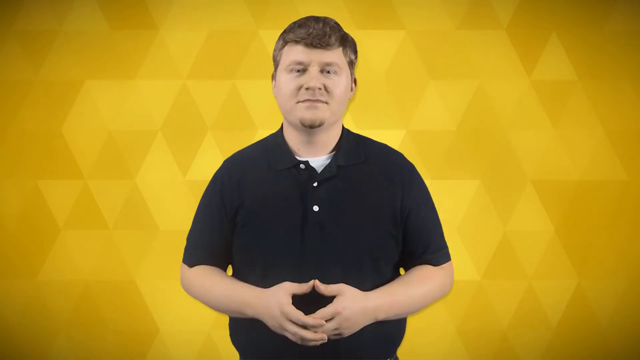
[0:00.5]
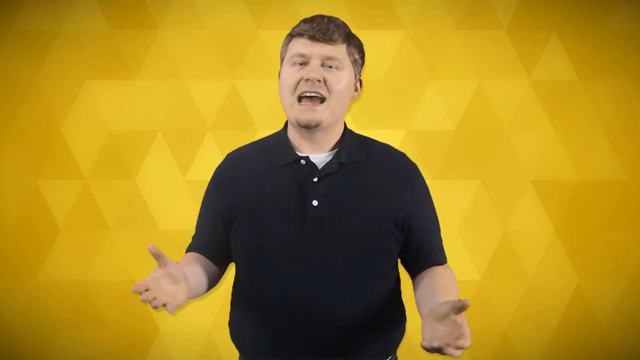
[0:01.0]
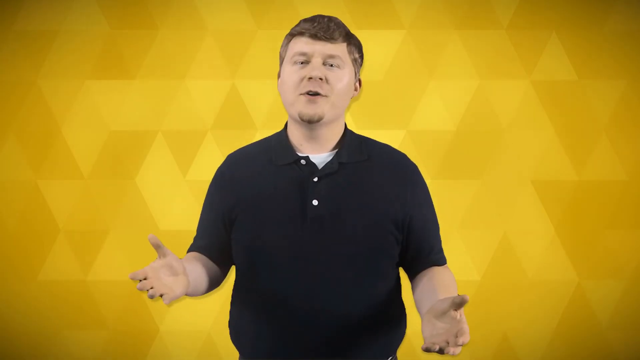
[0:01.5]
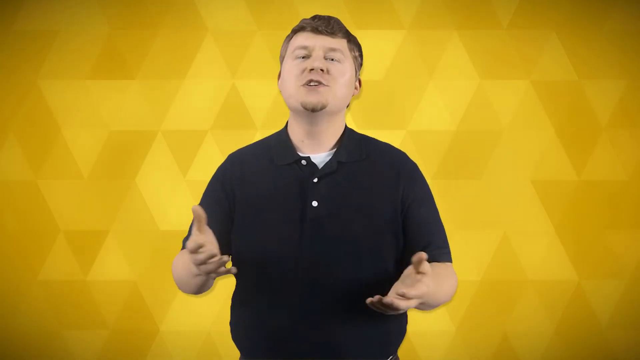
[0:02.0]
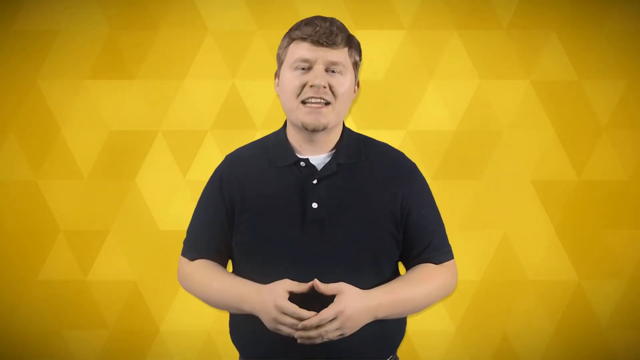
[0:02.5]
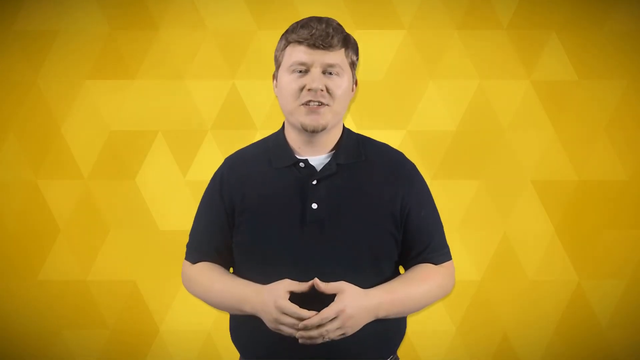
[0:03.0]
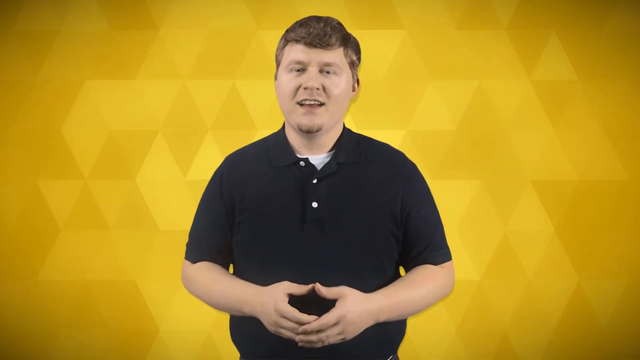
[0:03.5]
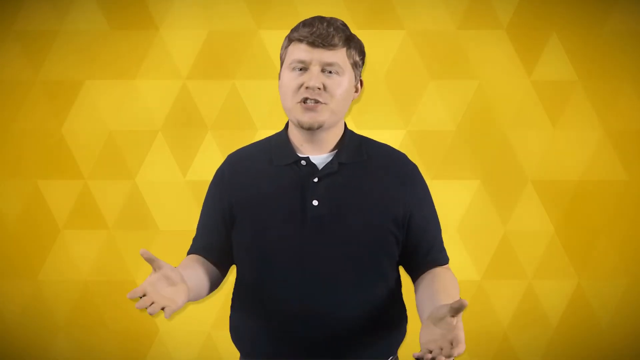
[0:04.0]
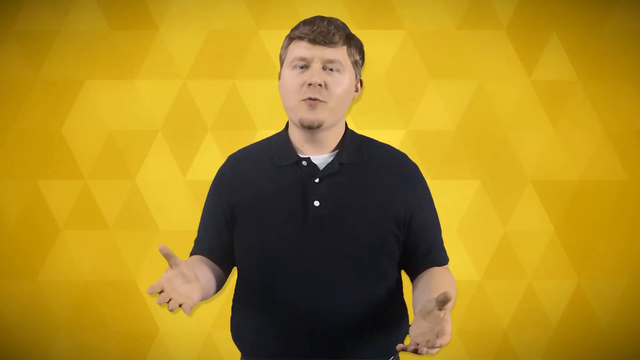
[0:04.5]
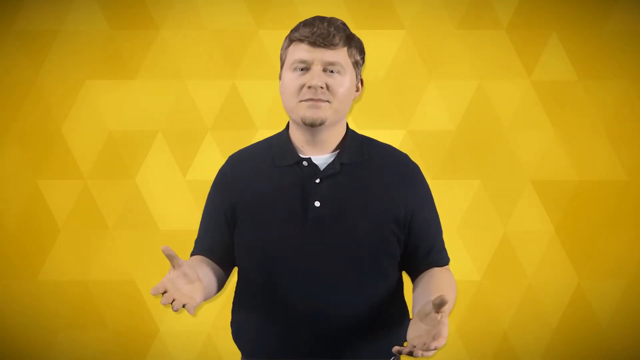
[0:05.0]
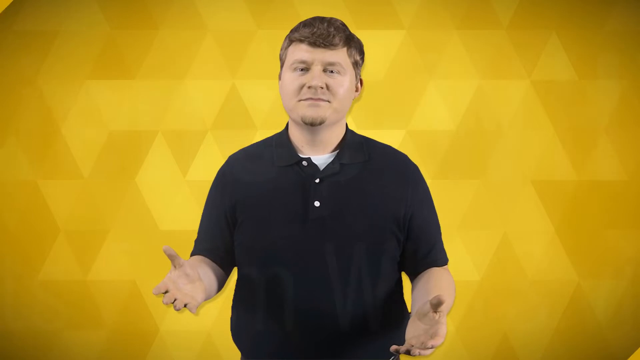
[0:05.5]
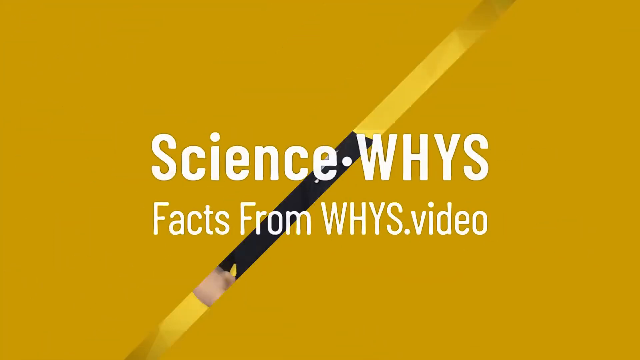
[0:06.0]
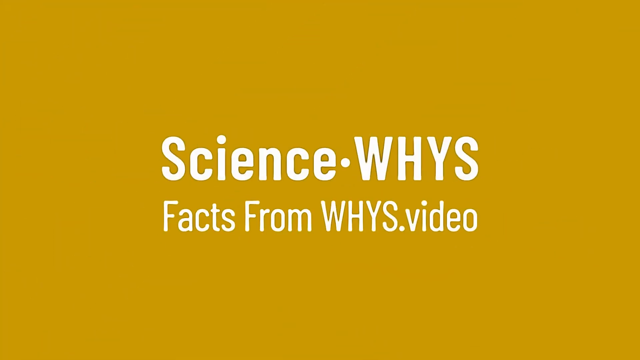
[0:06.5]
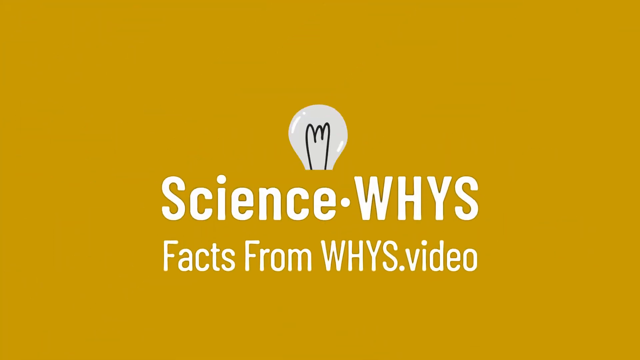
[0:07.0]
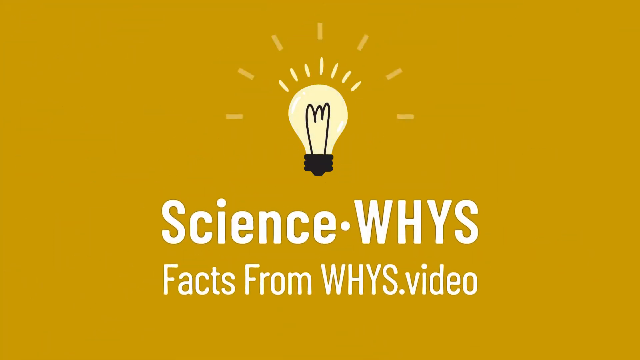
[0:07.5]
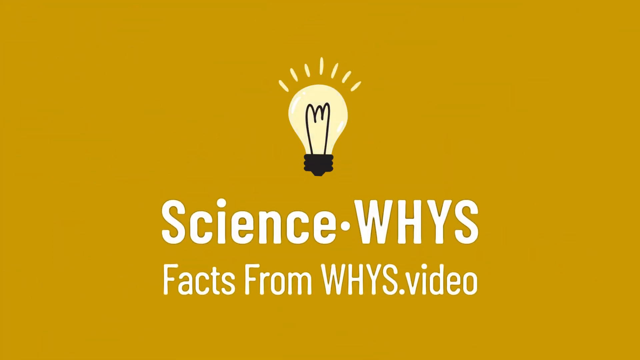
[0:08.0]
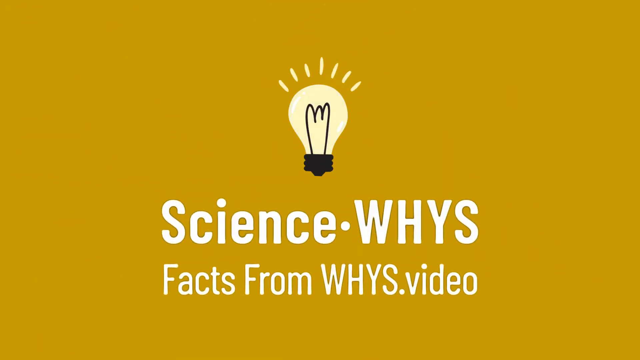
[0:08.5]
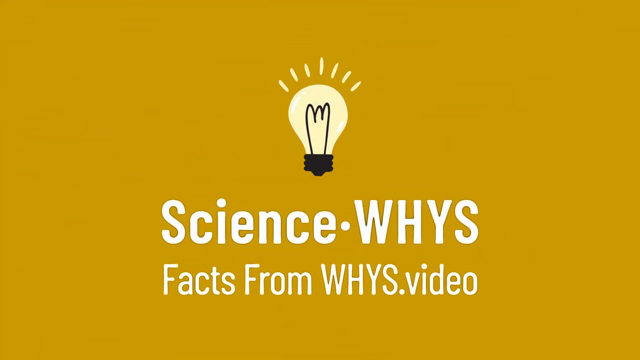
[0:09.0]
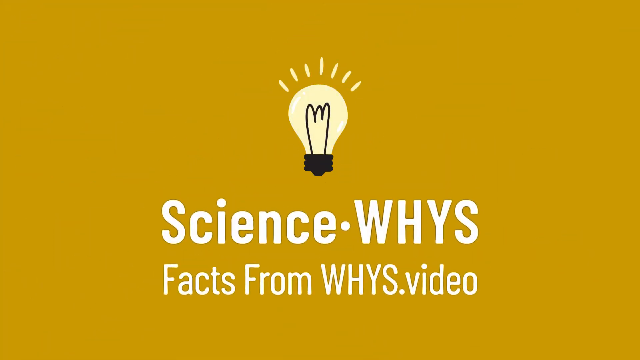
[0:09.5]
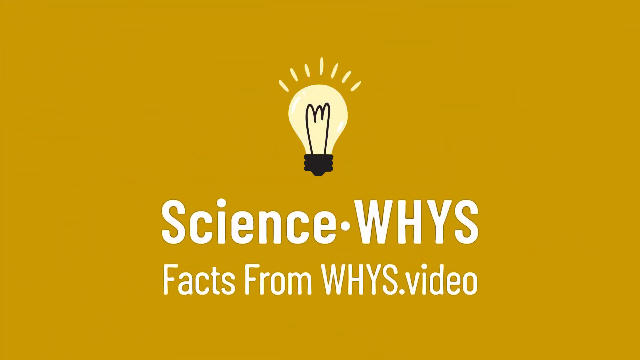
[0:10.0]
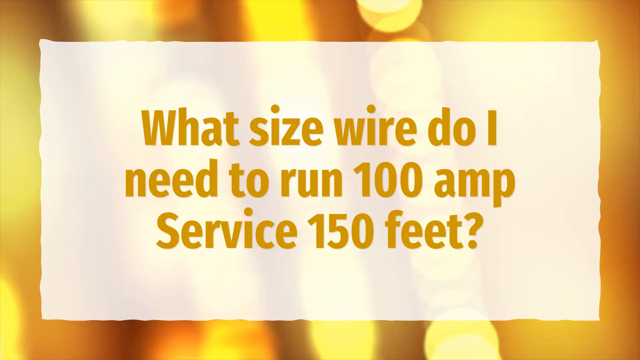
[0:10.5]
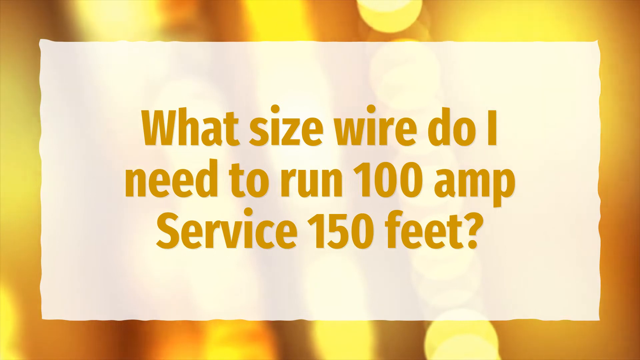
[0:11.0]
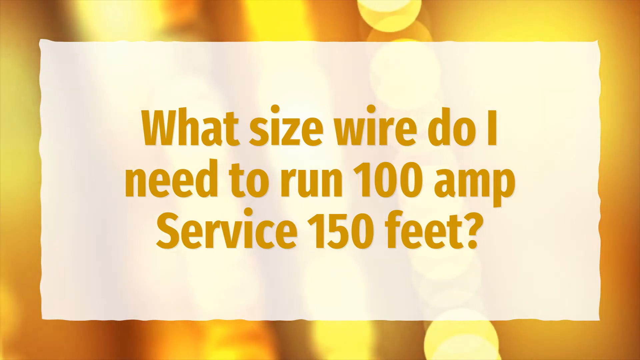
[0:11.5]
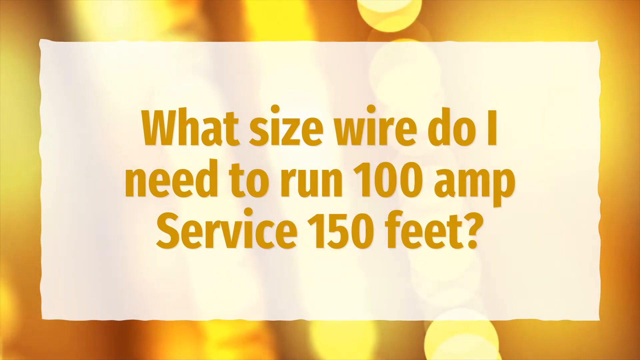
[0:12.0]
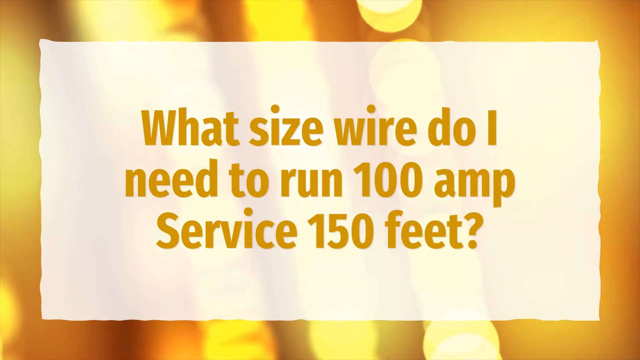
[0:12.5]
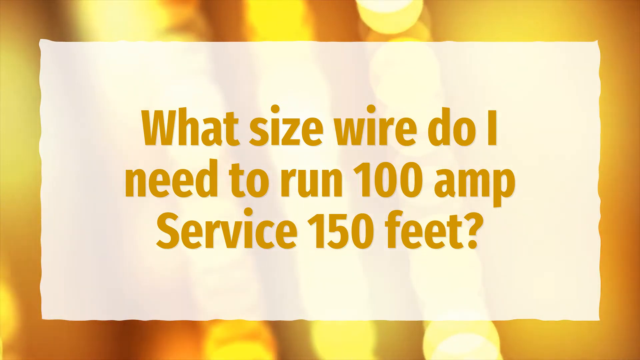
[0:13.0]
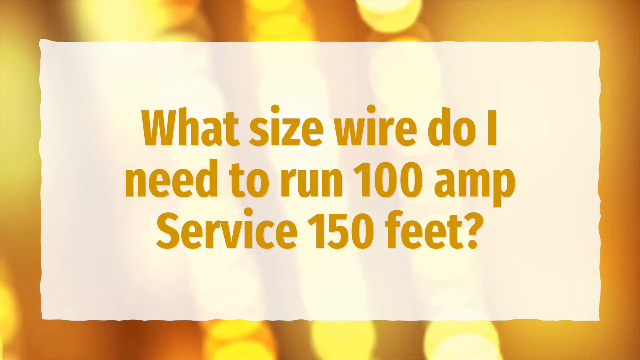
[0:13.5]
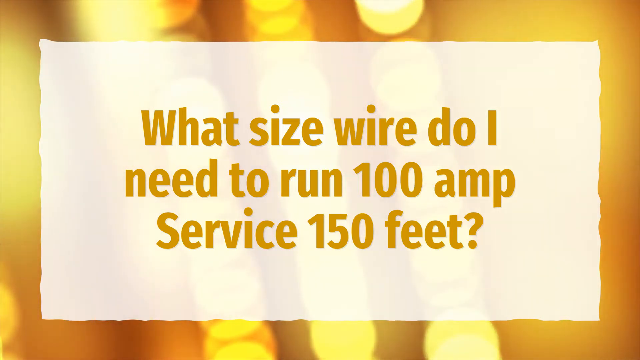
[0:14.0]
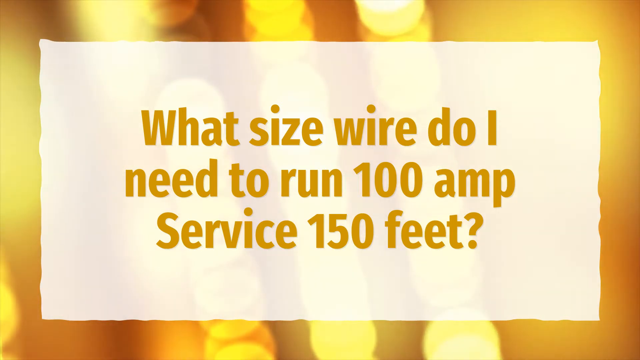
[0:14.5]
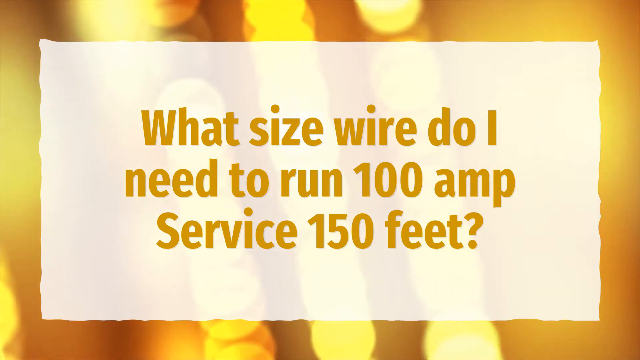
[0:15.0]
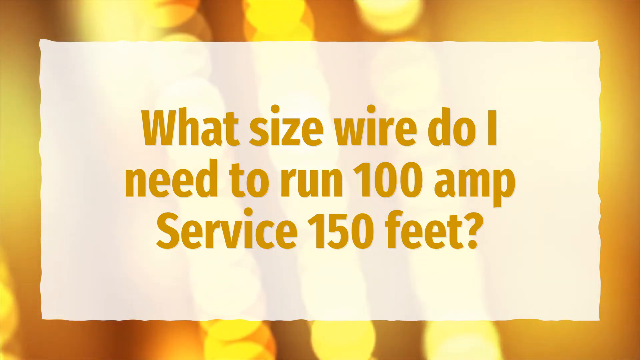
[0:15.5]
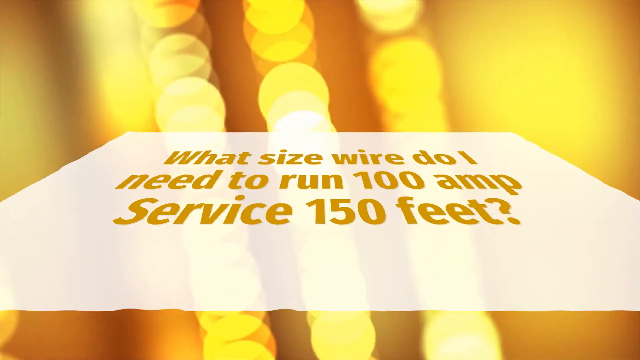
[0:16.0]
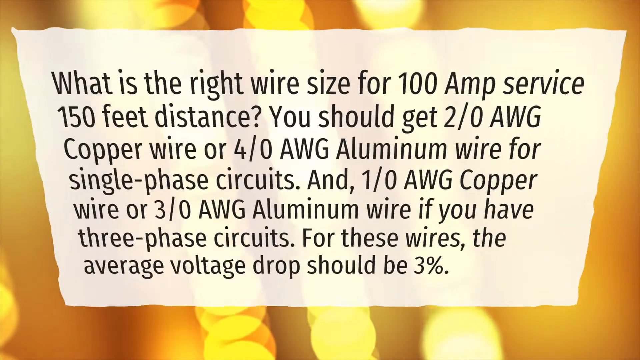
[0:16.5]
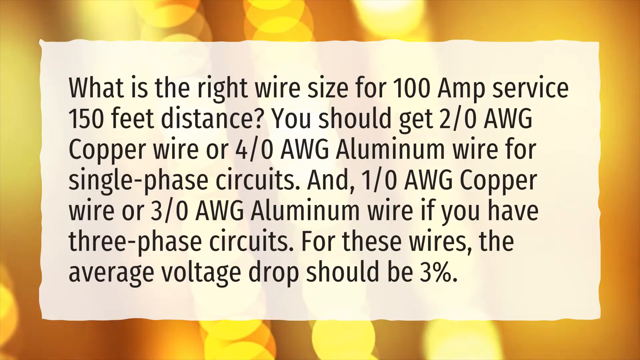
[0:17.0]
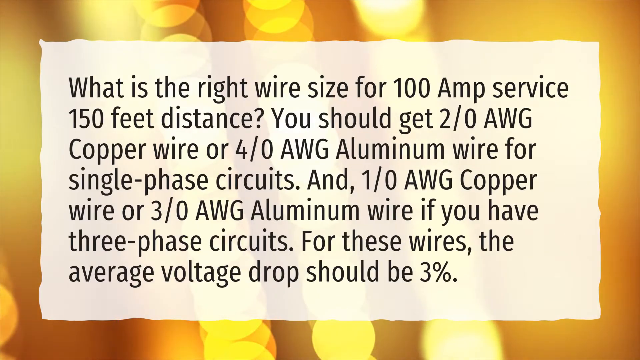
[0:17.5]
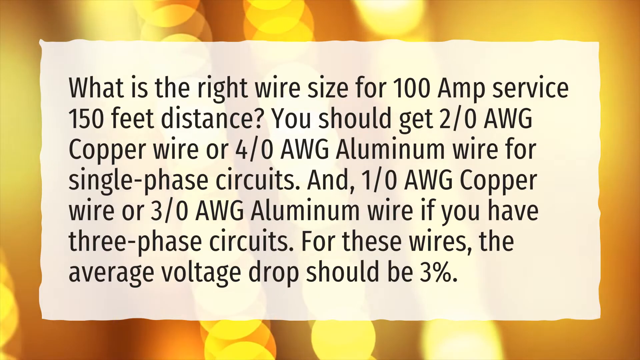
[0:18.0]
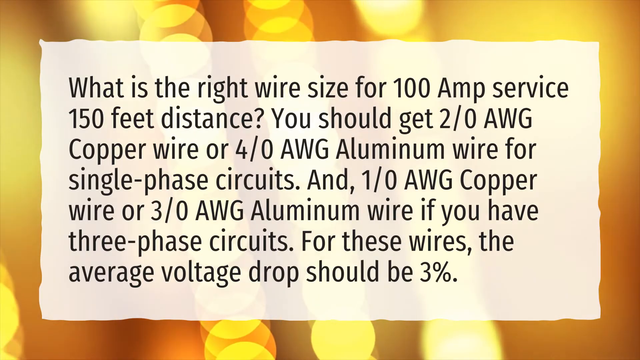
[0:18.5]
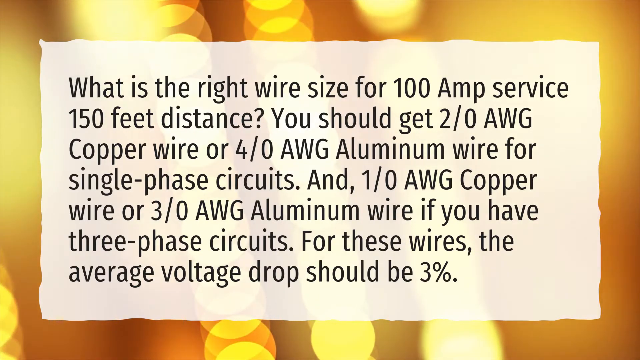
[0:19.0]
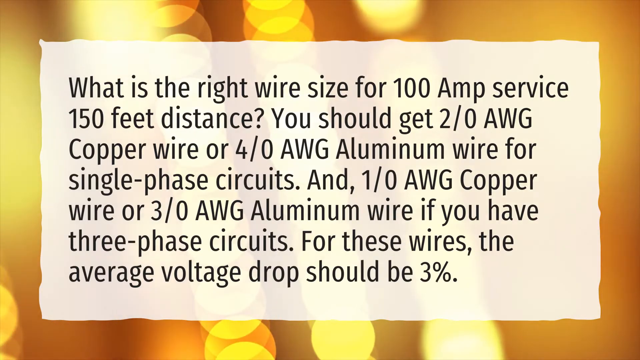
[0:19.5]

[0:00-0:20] The video opens on a man looking directly at the viewer. He has a white skin tone, a very small goatee and brown hair, and wears a black shirt with three white buttons near the collar. At the beginning he lifts his arms in the air. The background is sort of graphic-looking and yellow. The man talks to the viewer, and then a pop-up appears reading "ScienceWhysFactsFromWhys.video", with a little cartoon light bulb in a sort of light yellow color above the ScienceWhys message. A sort of white paper then appears in the background with the words "What size wire do I need to run a hundred amp service, 150 feet?" The answer apparently follows on the same sort of white paper in black text: "What is the right wire size for a hundred amp service, 150 feet distance? You should get 2/0 AWG copper wire or 4/0 AWG aluminum wire for single phase circuits."